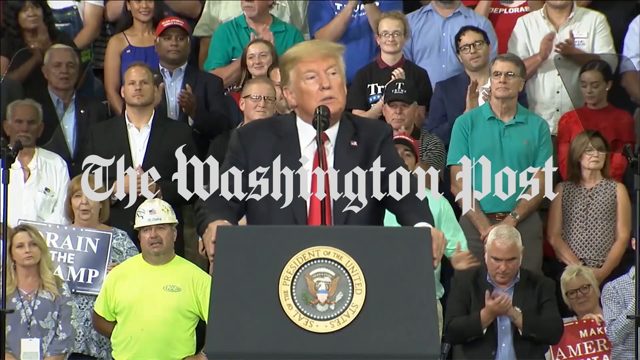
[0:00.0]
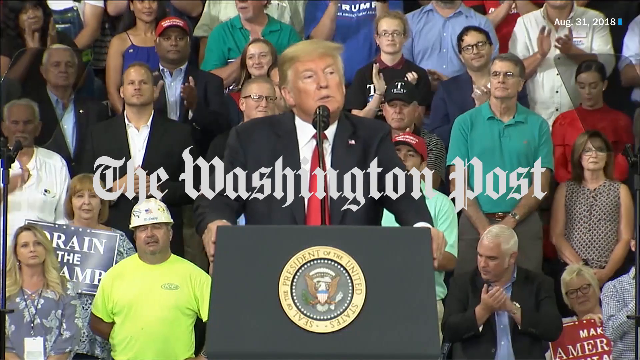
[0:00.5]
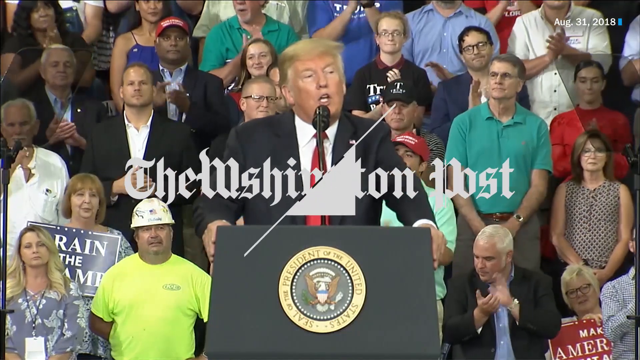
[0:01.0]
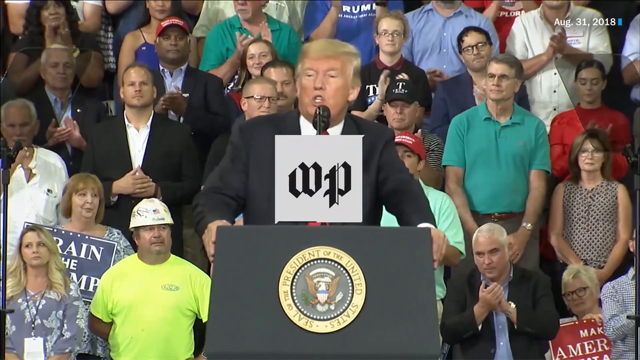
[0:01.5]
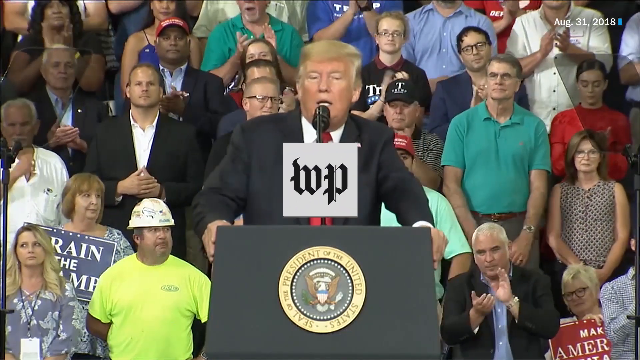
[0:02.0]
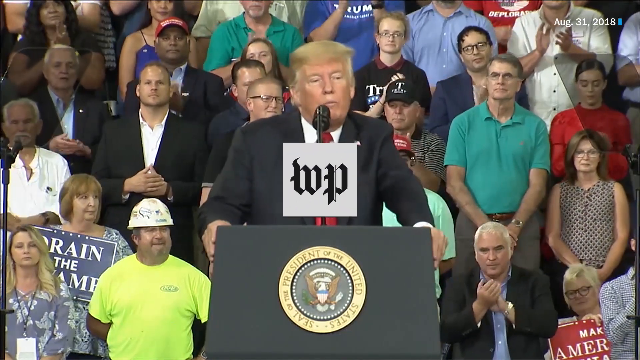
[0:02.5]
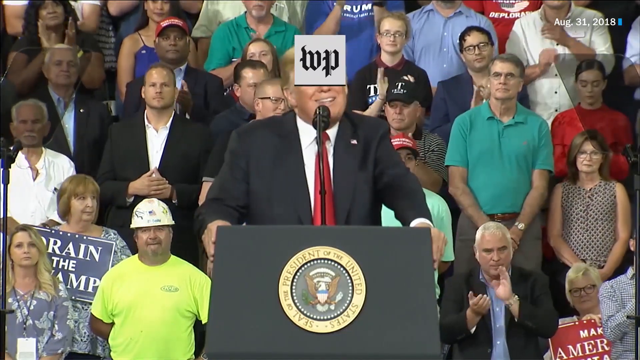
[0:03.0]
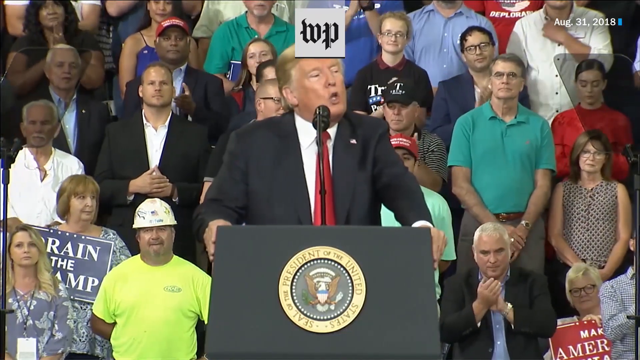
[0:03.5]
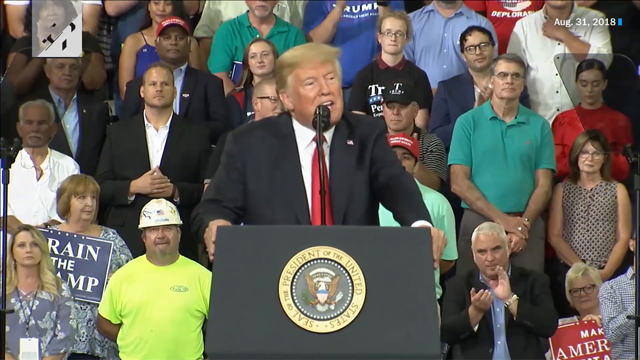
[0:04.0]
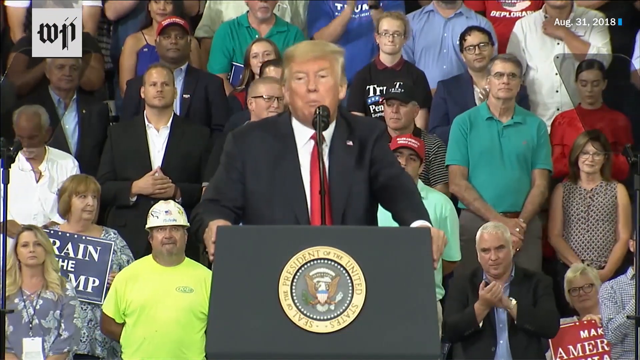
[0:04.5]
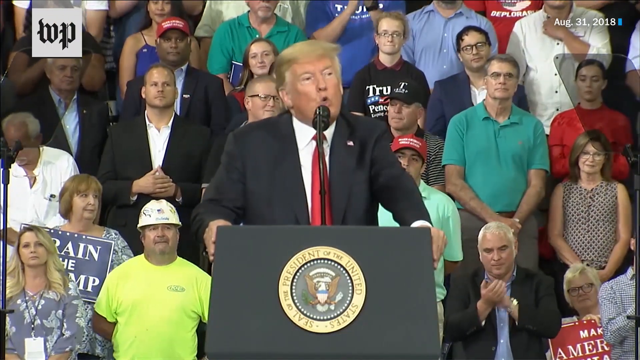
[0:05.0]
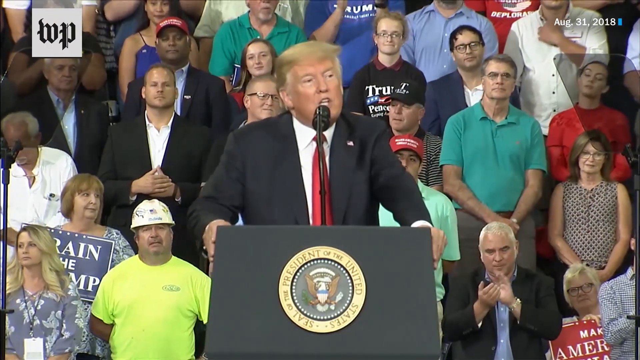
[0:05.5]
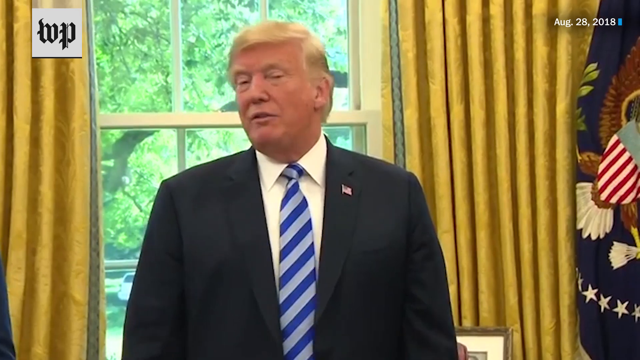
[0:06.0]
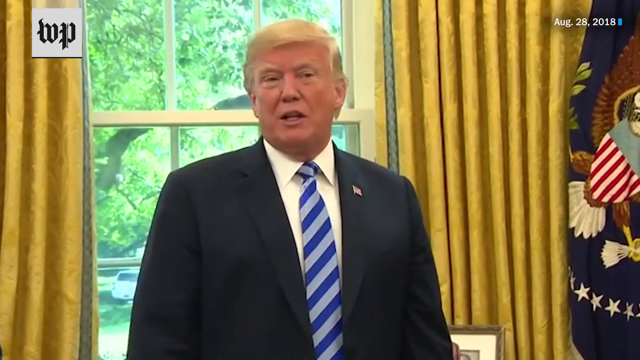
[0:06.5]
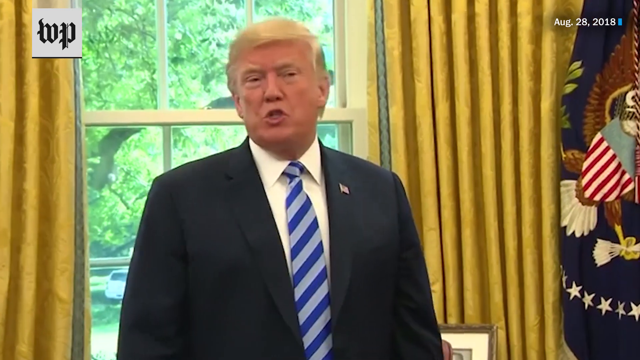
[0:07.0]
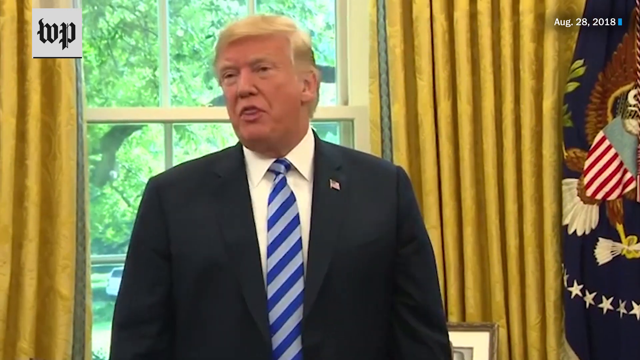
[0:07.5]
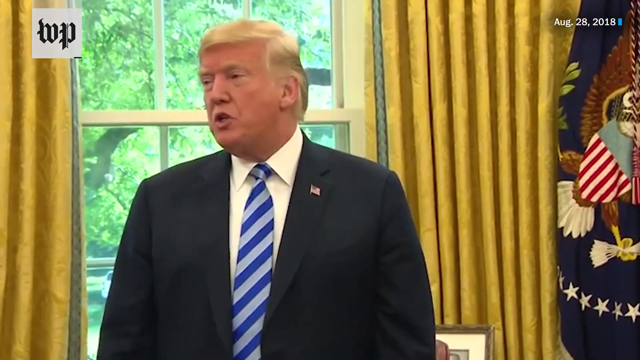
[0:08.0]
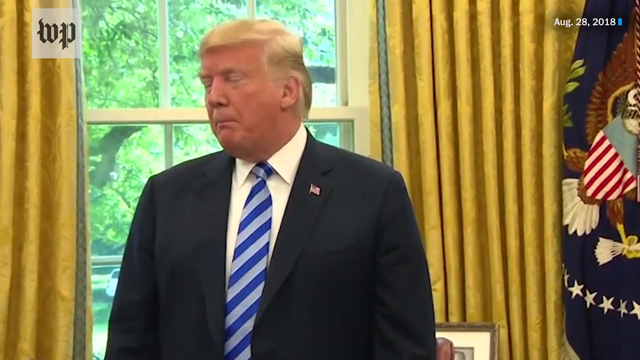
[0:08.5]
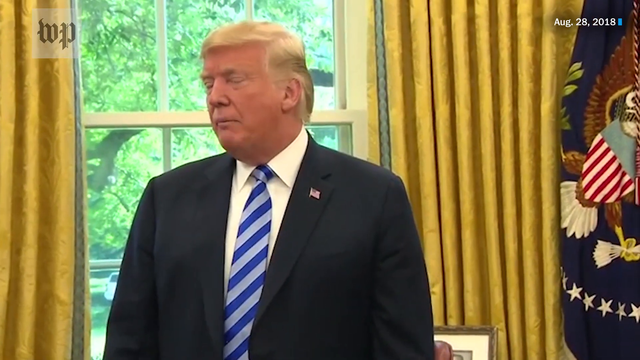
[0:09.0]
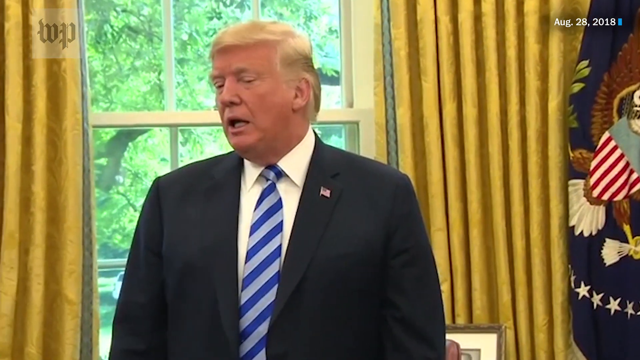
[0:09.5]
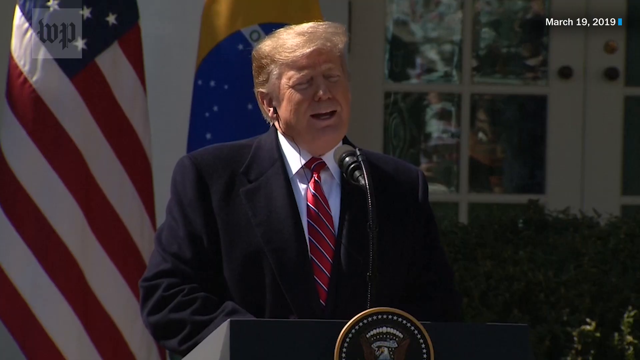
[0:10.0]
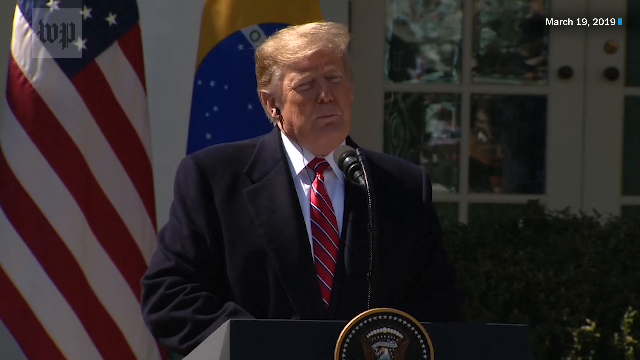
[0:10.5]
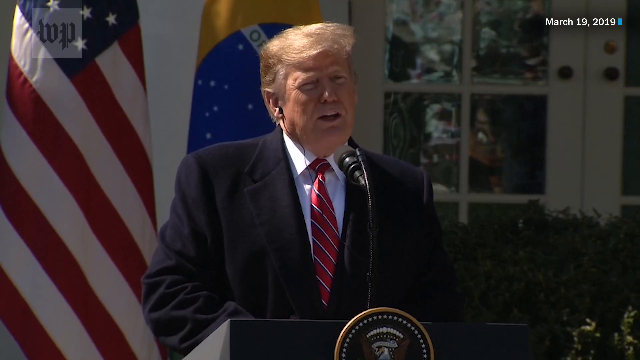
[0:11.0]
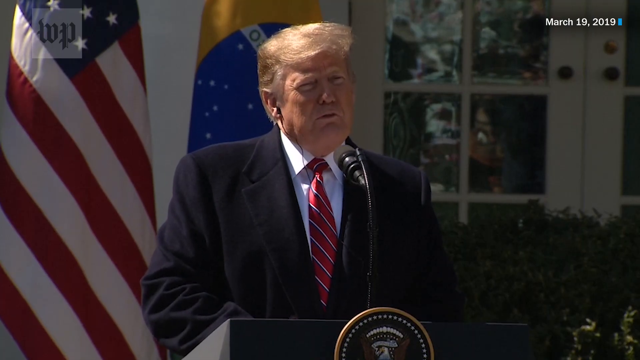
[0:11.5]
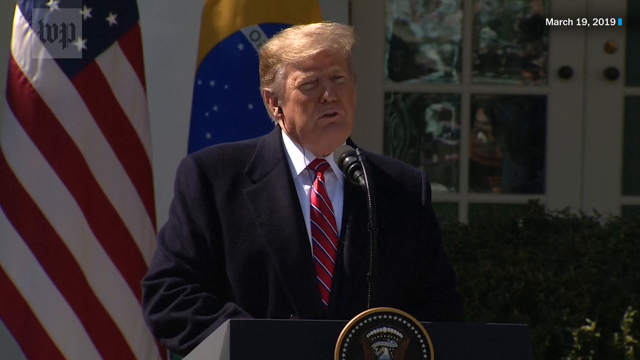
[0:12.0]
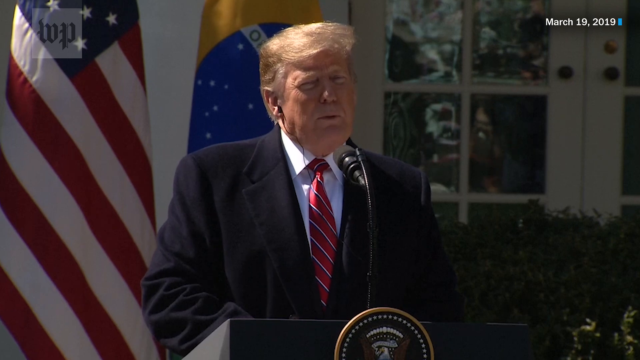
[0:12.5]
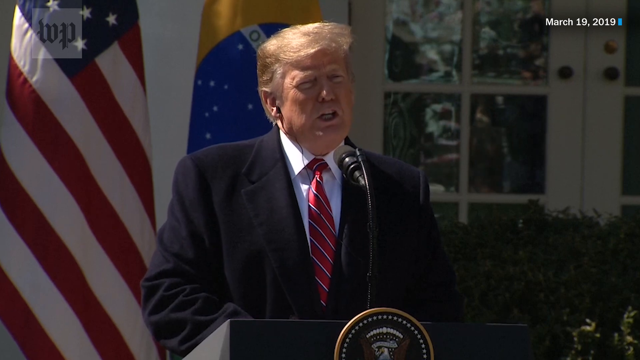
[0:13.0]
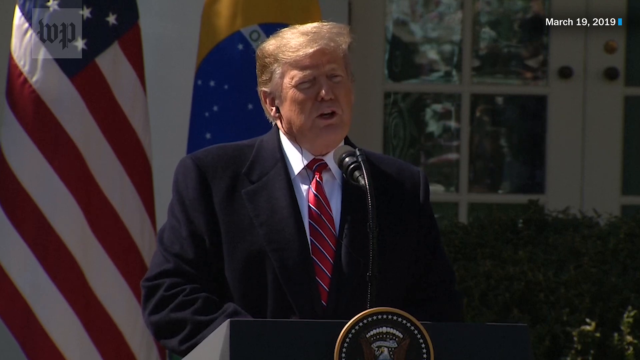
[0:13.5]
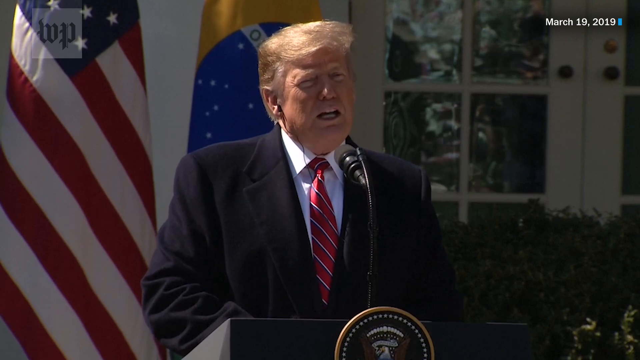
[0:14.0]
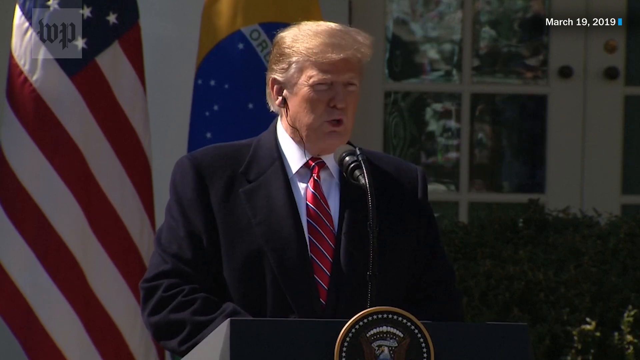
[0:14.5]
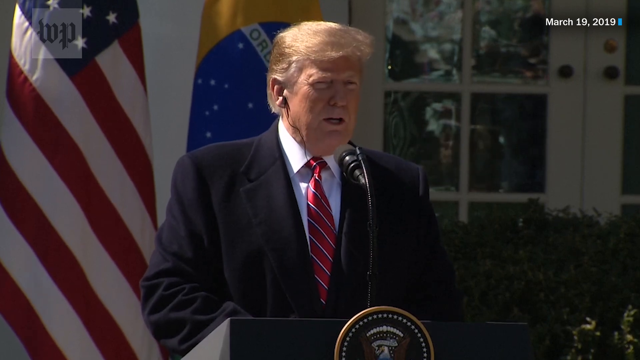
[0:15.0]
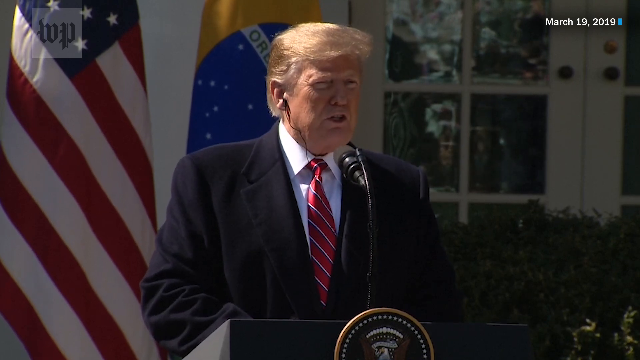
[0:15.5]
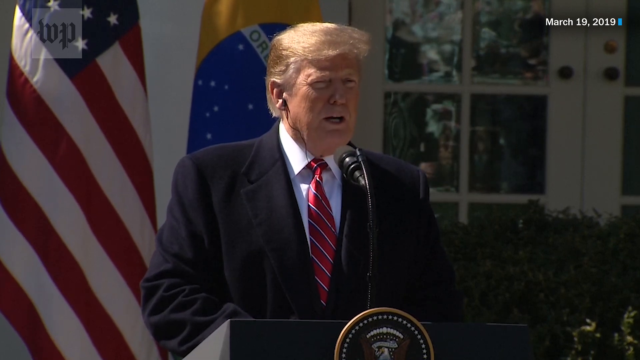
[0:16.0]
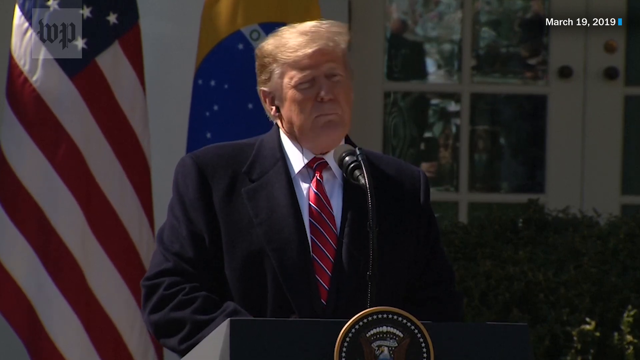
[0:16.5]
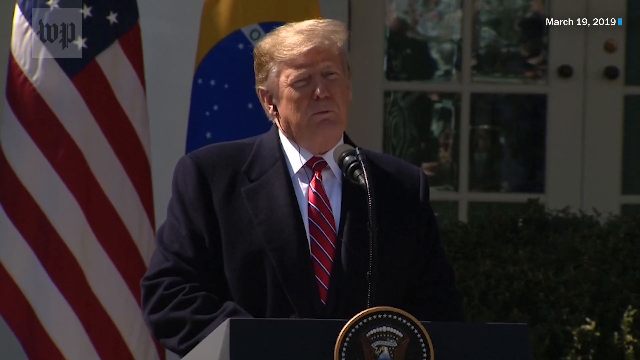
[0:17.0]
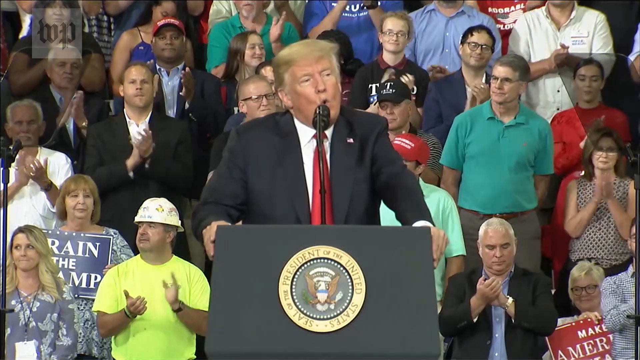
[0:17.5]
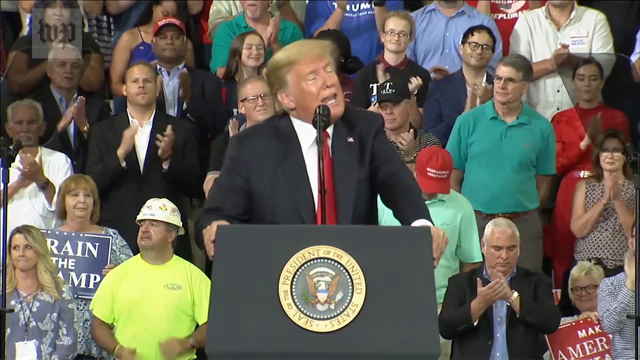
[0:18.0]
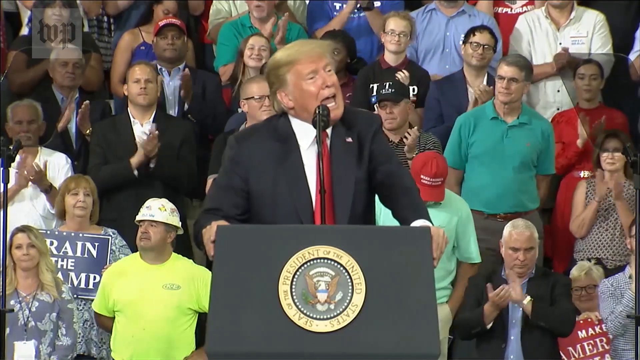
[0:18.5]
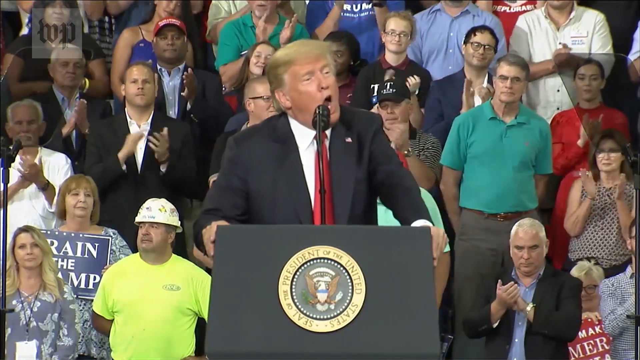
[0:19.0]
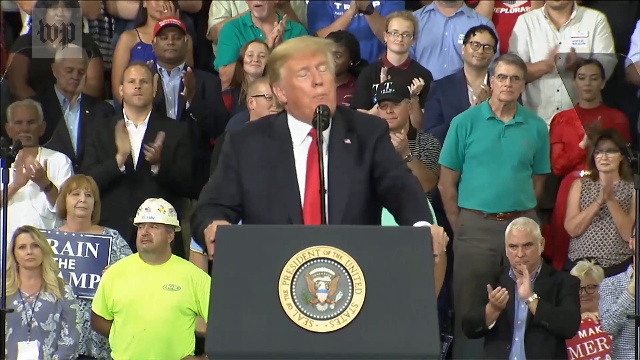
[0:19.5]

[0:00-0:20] President Trump gives a speech to a crowd in a public space. He stands with a pulpit in front of him, talking, and wears a black suit, a white shirt and a red tie. Many people are behind him, mostly white people; they look like random people. The video then moves to him making a speech in a room that, judging from the window, looks like the White House, and then moves back to him speaking in public. The footage appears to come from three different videos taken at different locations, since his outfit differs in each: first a black jacket and a red tie, then a black jacket, a white shirt and a blue tie with stripes, and finally a red tie with stripes.